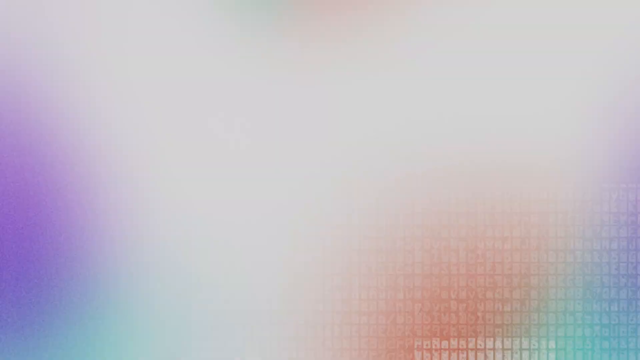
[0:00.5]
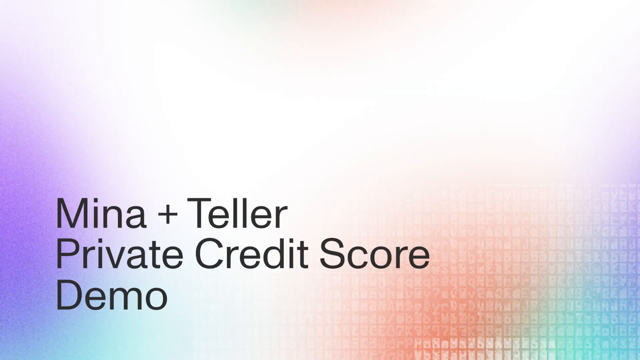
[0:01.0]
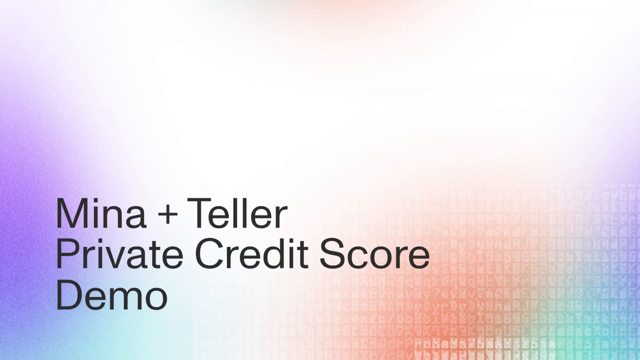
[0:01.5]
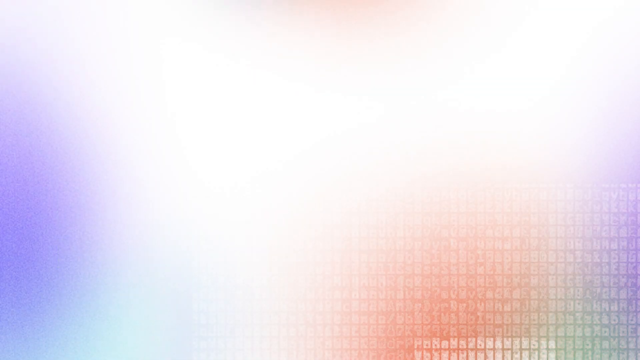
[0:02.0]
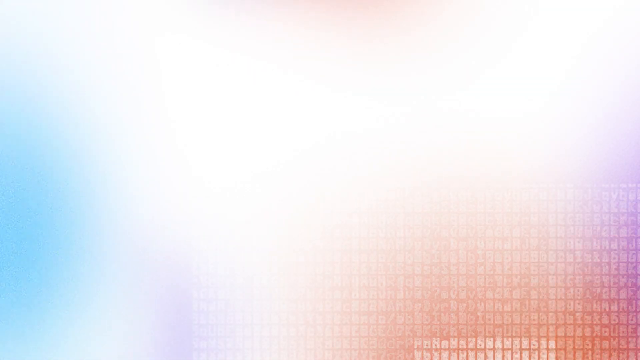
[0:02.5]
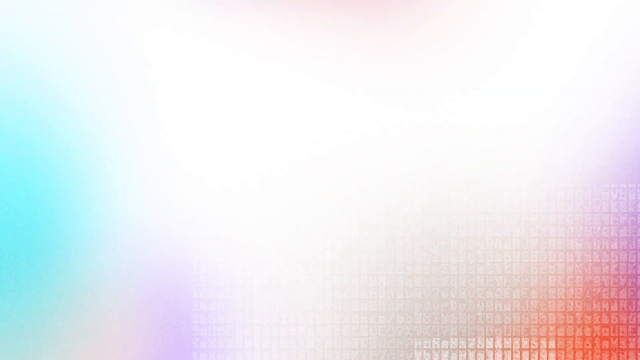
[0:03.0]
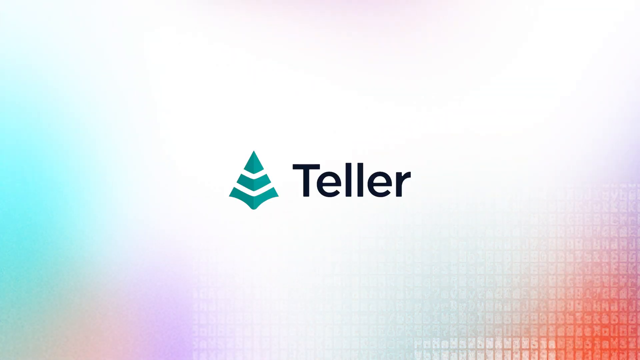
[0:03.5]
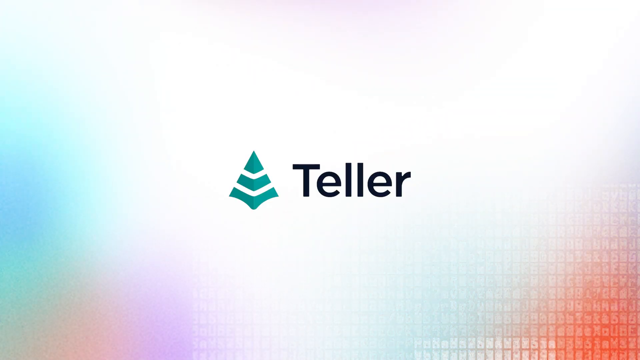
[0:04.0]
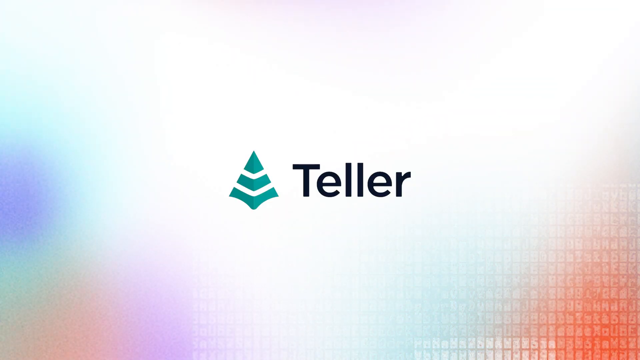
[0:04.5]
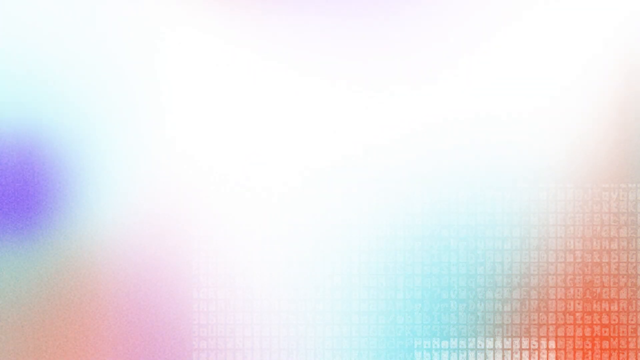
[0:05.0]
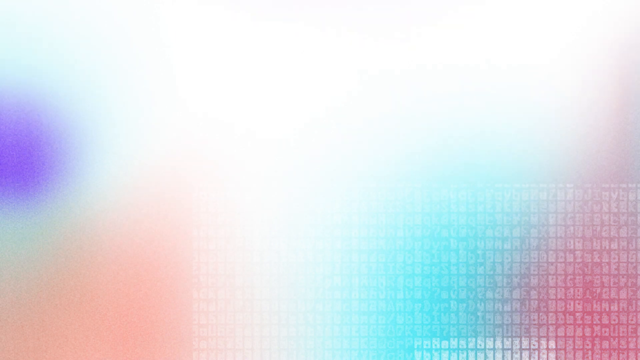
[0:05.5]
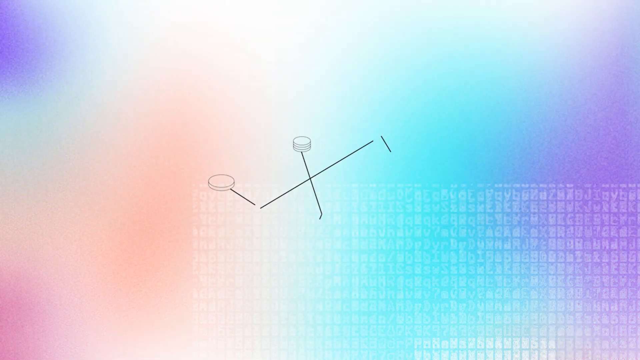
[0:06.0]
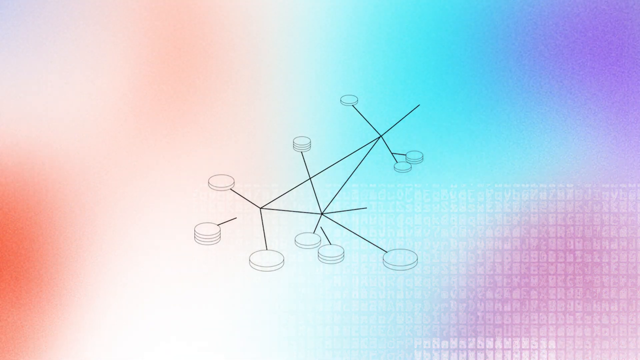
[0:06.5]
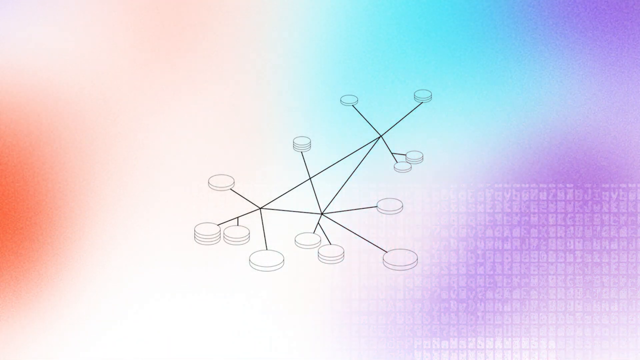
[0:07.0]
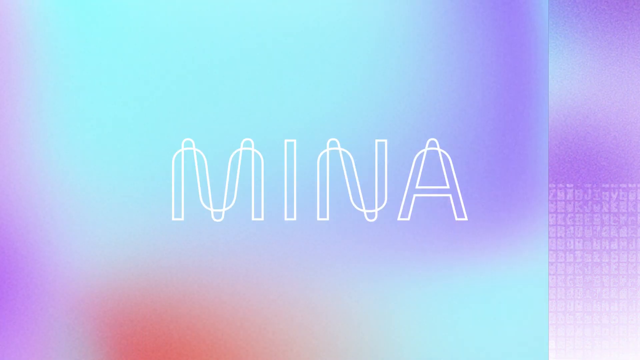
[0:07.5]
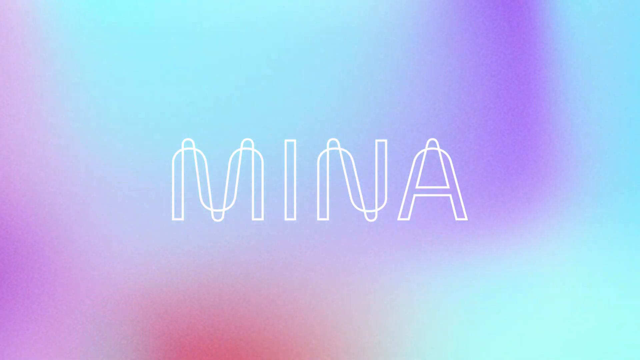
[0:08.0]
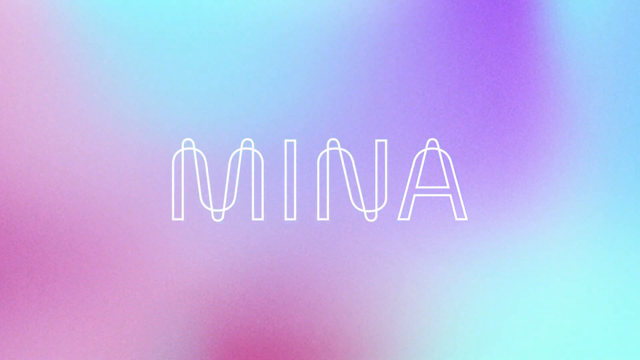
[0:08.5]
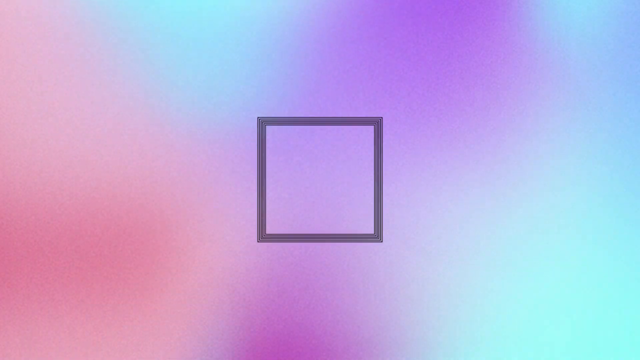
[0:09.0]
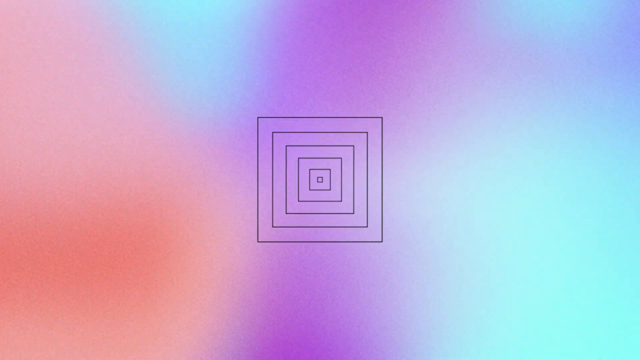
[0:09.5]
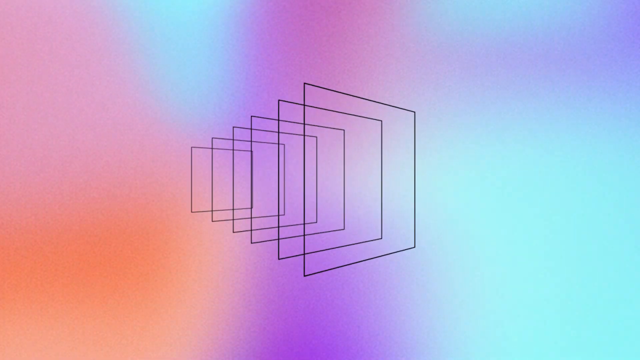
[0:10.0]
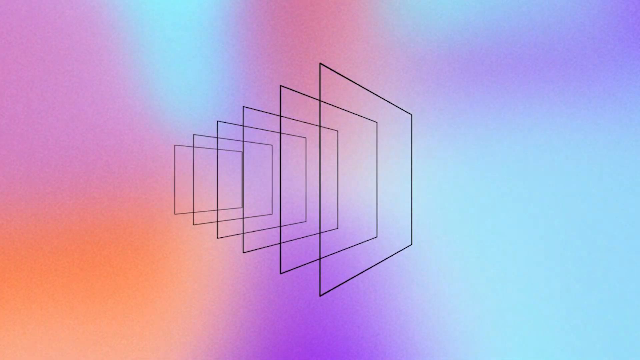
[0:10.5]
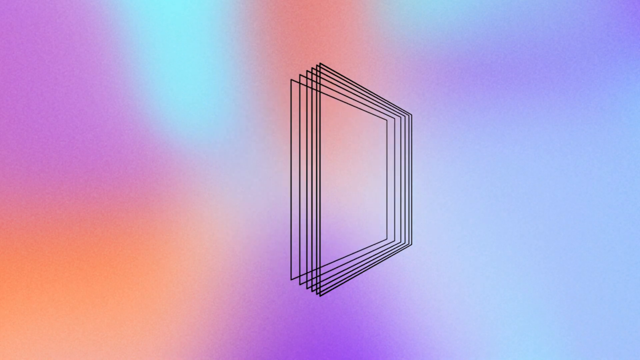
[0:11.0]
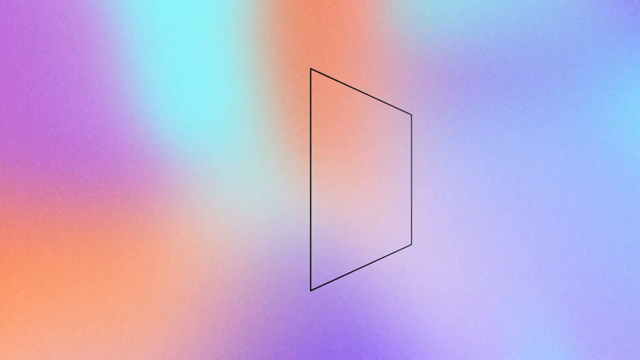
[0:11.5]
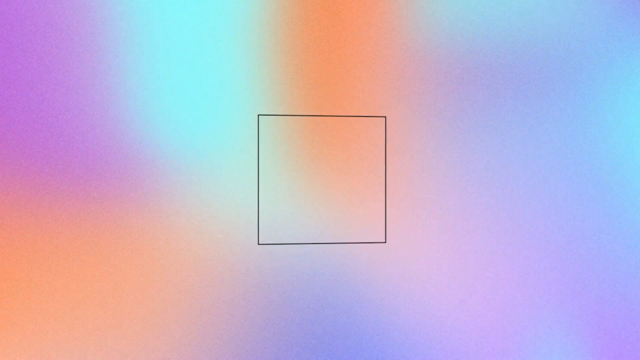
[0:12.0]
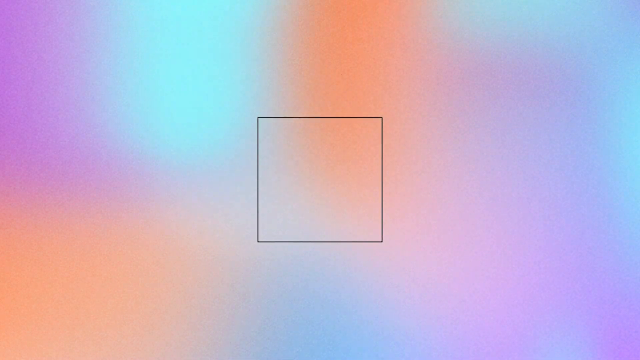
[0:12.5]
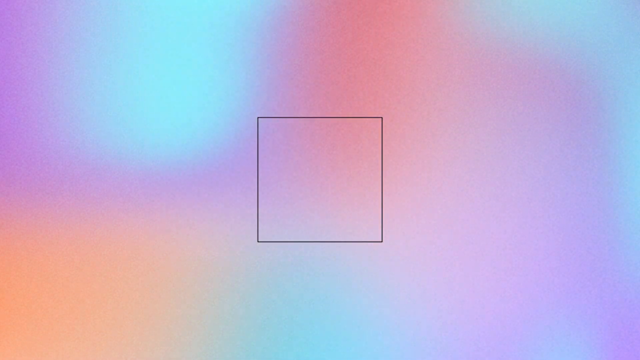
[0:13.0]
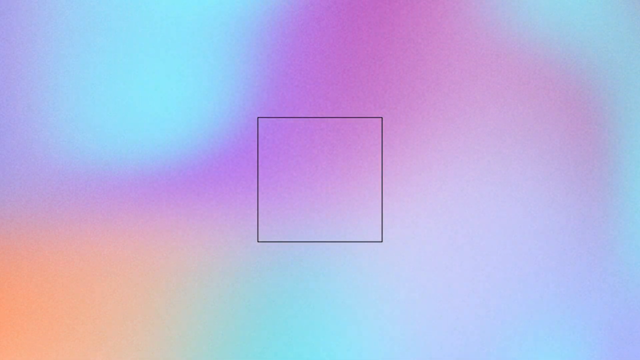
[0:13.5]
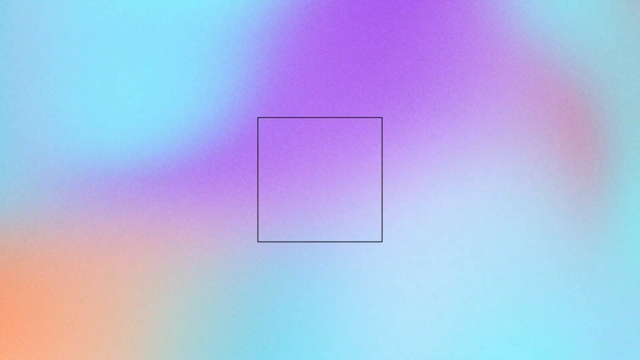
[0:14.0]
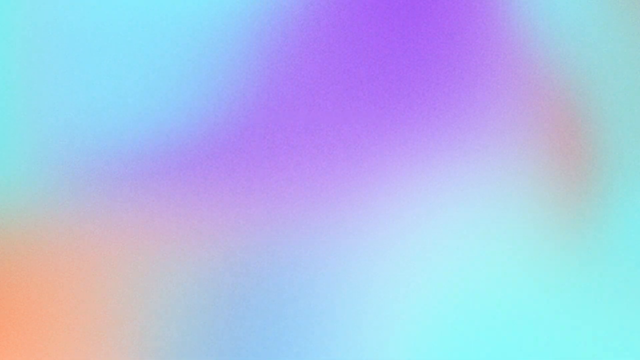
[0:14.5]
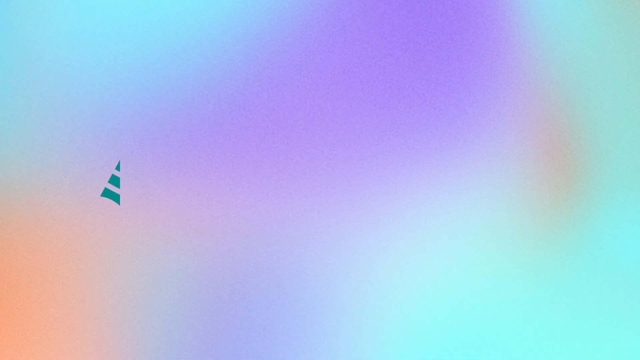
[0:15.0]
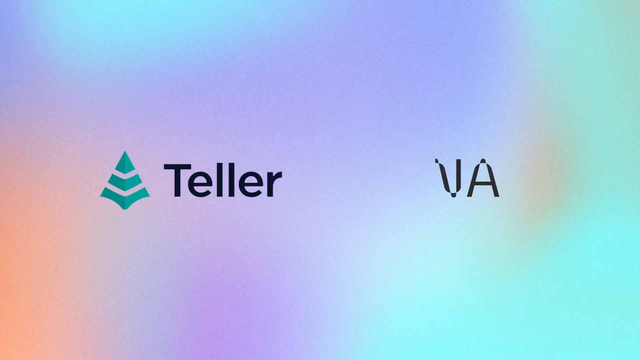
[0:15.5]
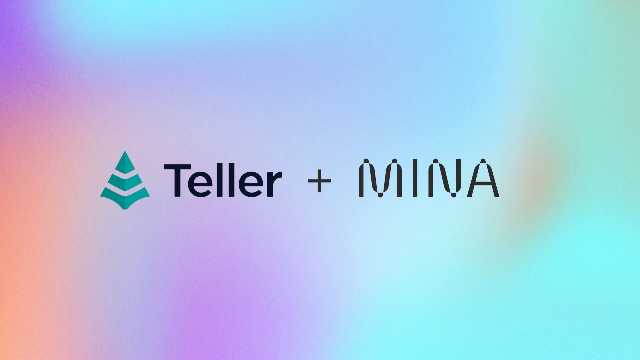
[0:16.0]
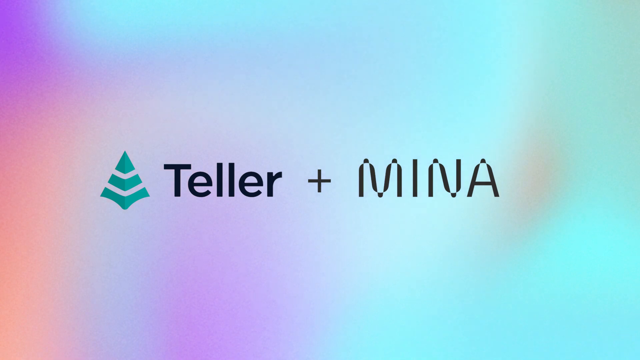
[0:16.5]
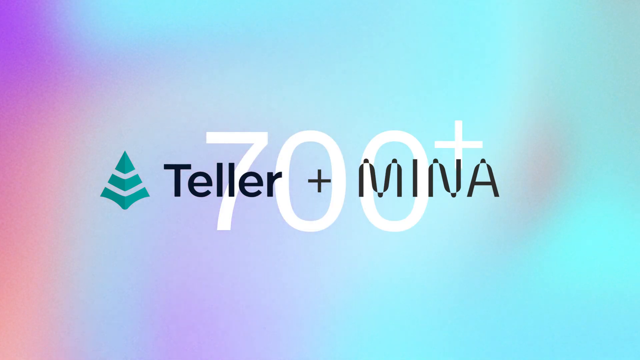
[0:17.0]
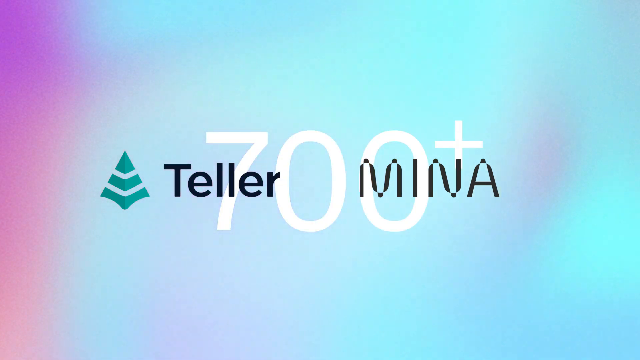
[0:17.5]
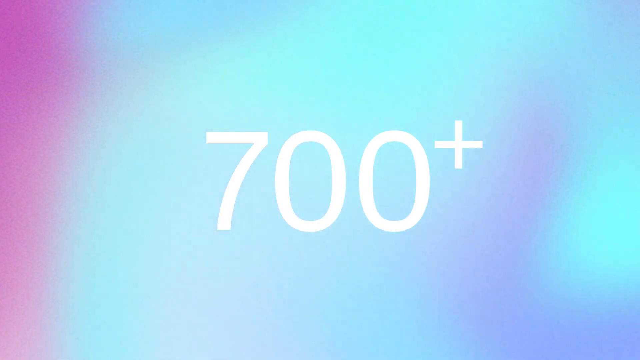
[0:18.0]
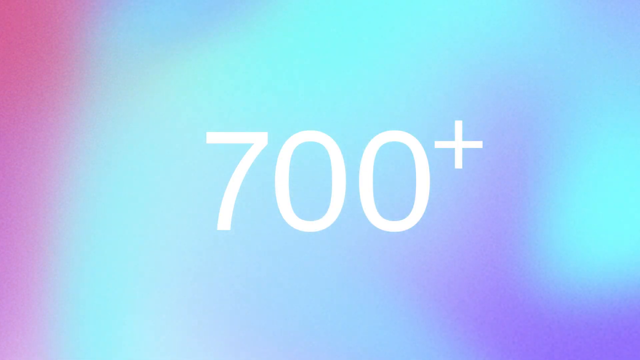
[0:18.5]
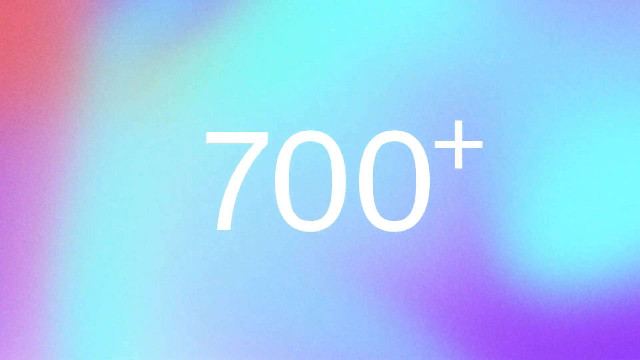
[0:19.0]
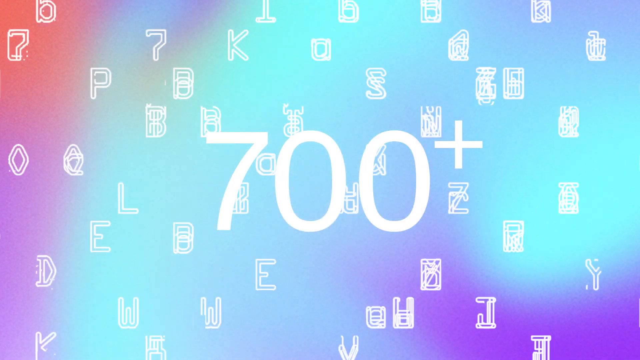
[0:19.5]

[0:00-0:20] The demo begins with a black screen, then transitions to a screen with hints of purple, green and orange in the background. Written across the screen toward the lower left corner is "MENA plus Teller private credit score demo." The Teller logo disappears, and a quick animated illustration of interconnected networks appears. Next, the text "MENA" is shown in large white letters. The text disappears and a square appears, which animates into concentric nested squares. The nested squares turn sideways in a 3D effect, then all come together to form one single square at an angle of about 30 degrees. It returns to the normal 2D plane and disappears. "Teller + MENA" is then written on the screen. It disappears to reveal the number 700 in white text with a "+" sign to its right. Lots of letters then pop up in white.